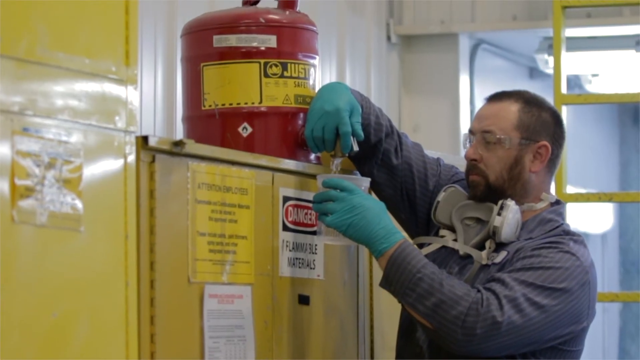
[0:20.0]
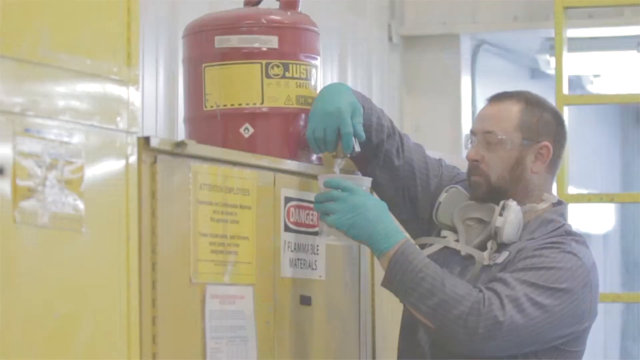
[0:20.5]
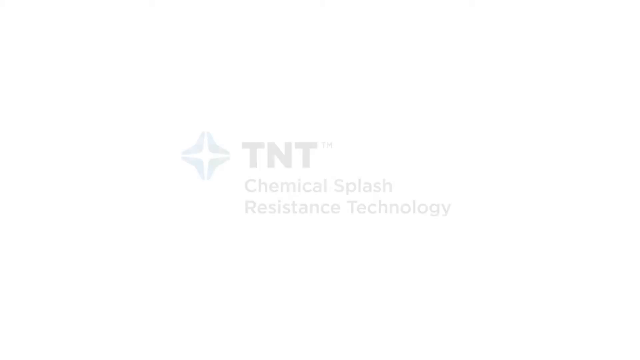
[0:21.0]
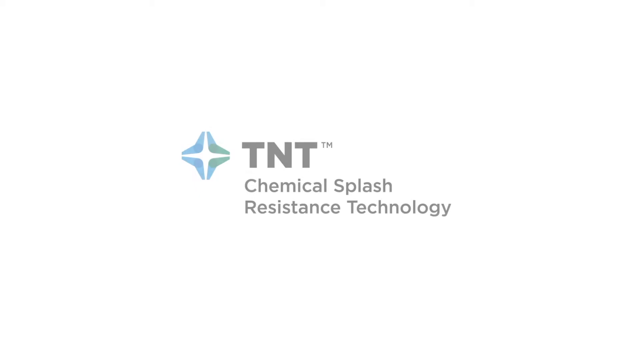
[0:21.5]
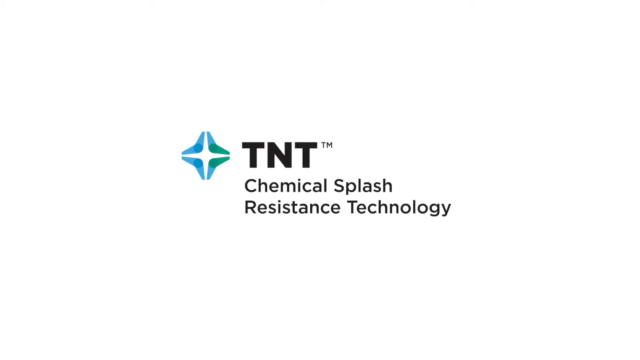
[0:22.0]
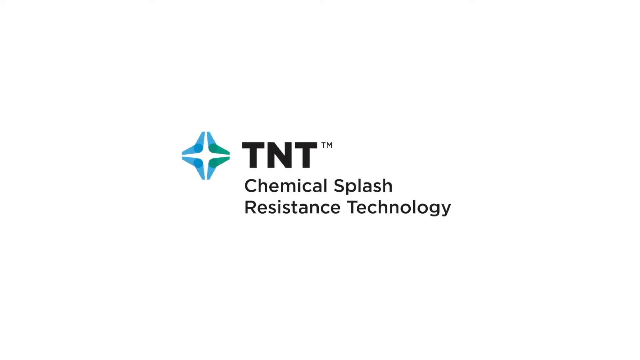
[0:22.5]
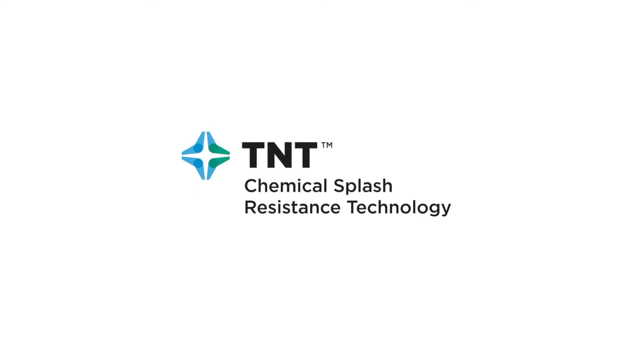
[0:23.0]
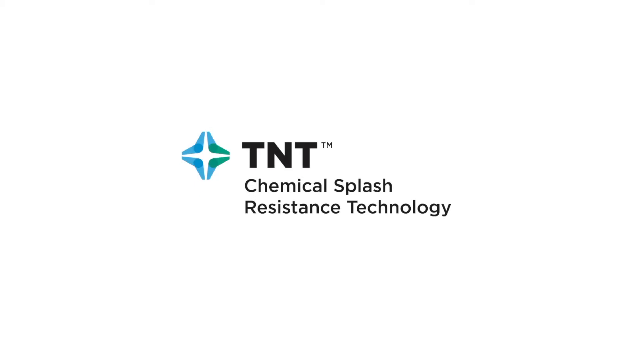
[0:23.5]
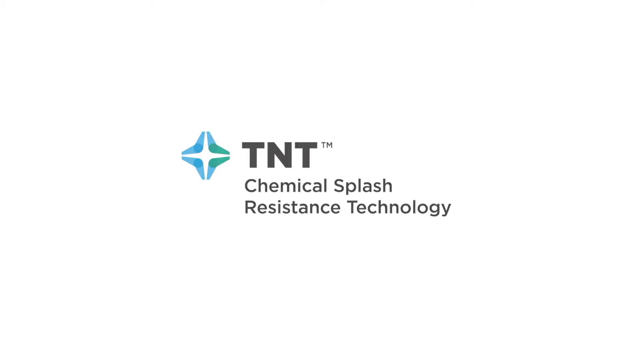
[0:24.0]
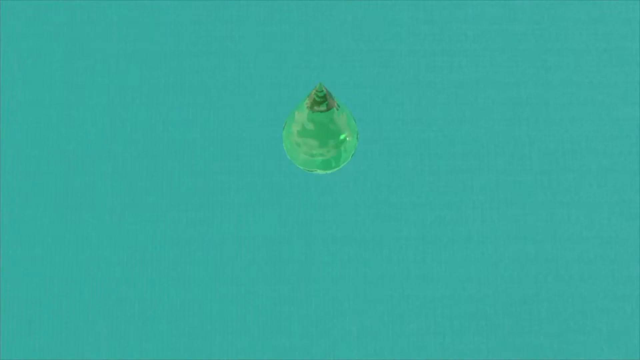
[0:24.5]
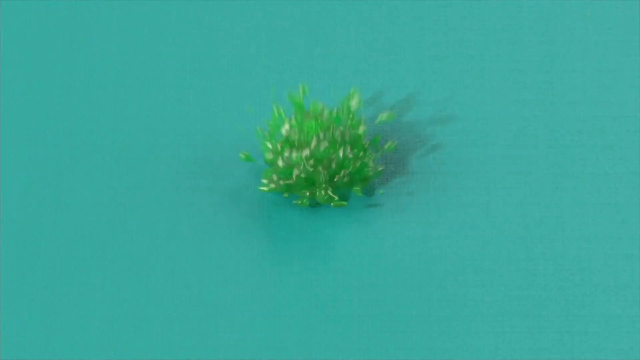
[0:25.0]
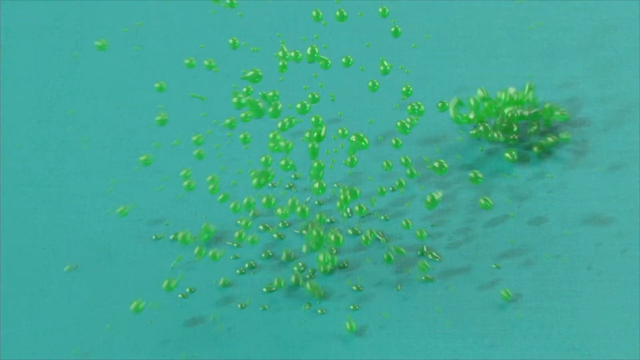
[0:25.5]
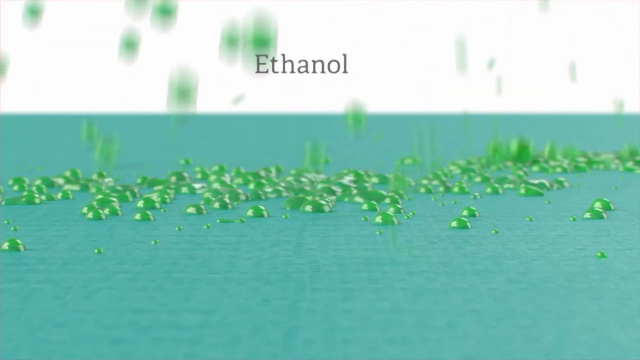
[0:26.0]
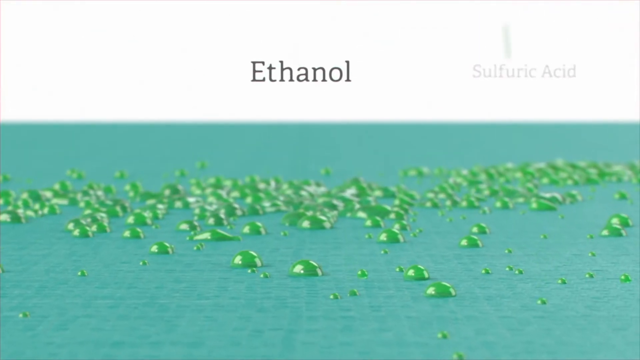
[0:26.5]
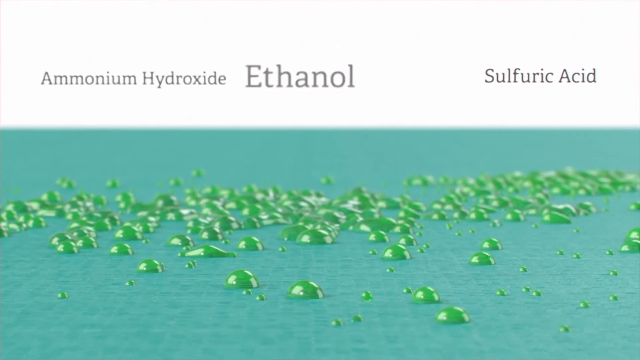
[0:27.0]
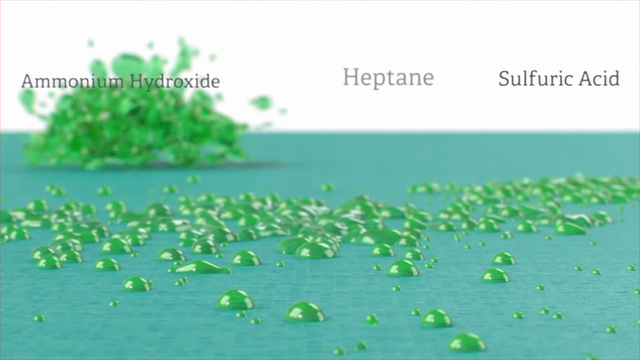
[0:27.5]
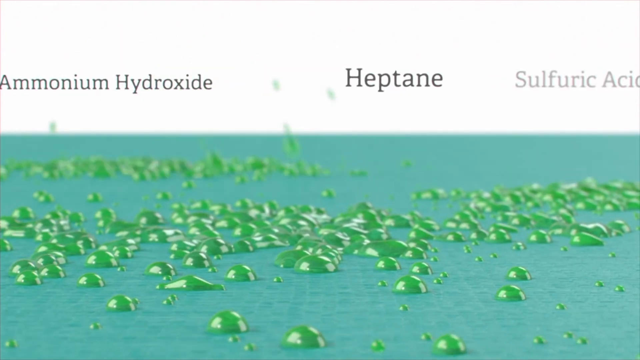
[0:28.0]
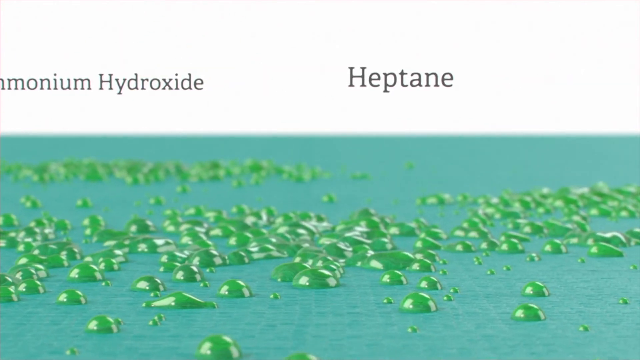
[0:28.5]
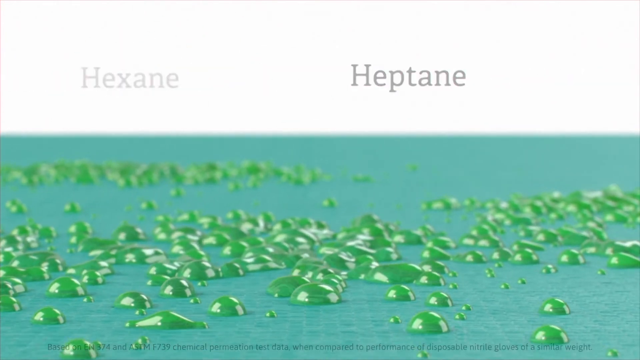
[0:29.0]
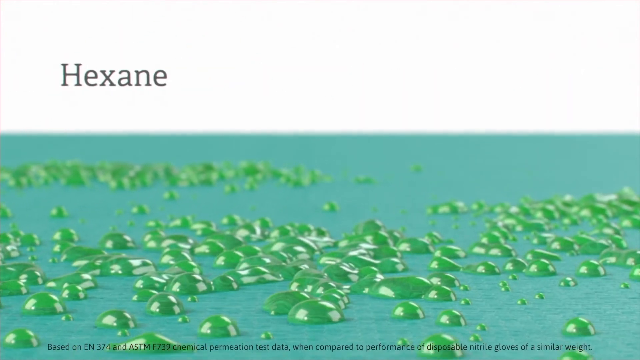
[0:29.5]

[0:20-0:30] A man wears plastic protective glasses, teal disposable gloves and a gray jumpsuit, with a respirator or ventilator type mask draped around his neck. He is in front of yellow metal lockers and pours what looks like chemicals into a plastic disposable cup out of a giant red canister that is sitting on top of the yellow lockers. The red canister has a yellow sign with warning labels on it, and the yellow locker also has a big warning label in white, red and black that says "danger flammable materials." Text then reads "tnt chemical splash resistant technology," followed by "ethanol," "sulfuric acid," "heptane," "hexane" and "pro alcohol," apparently listing the different things the gloves keep away from the wearer.